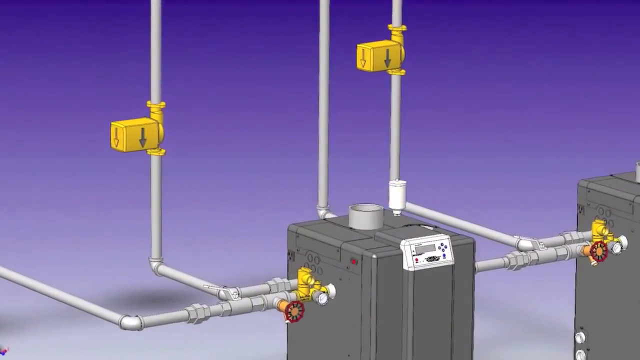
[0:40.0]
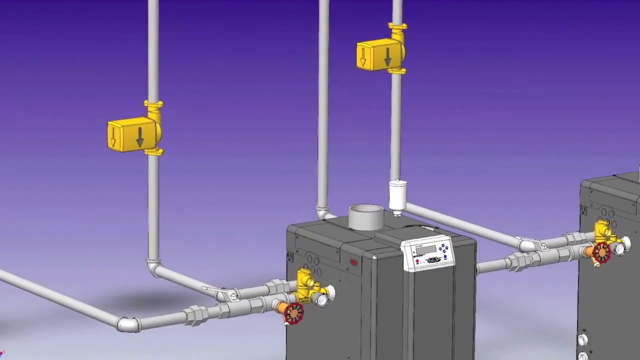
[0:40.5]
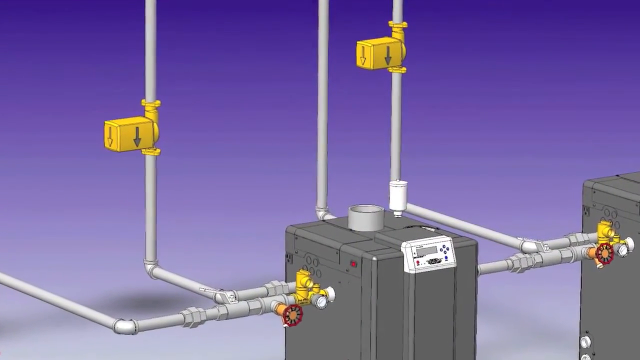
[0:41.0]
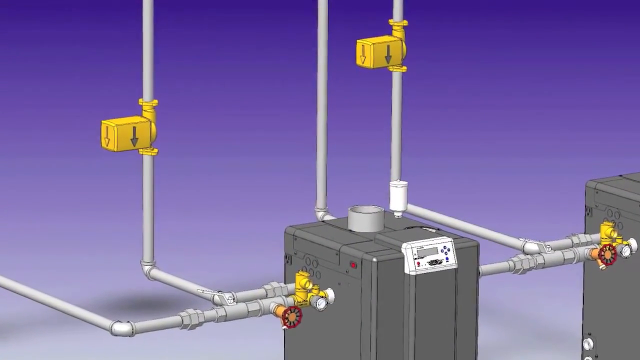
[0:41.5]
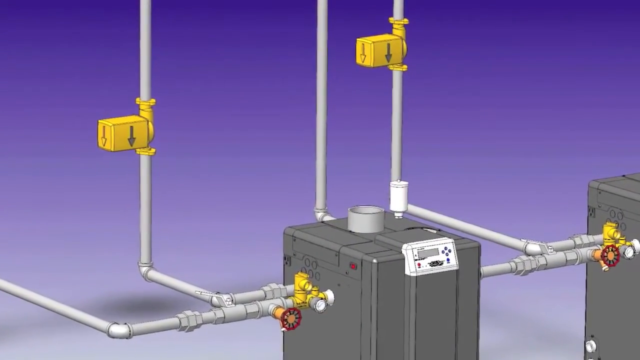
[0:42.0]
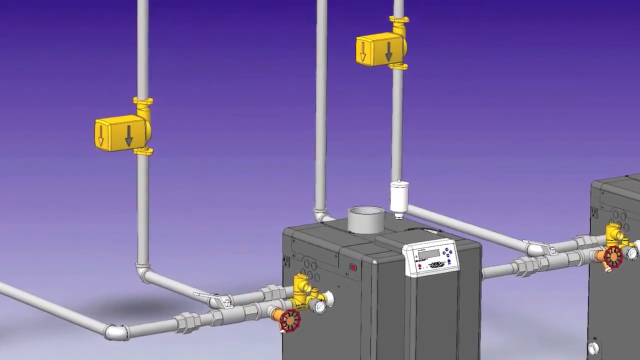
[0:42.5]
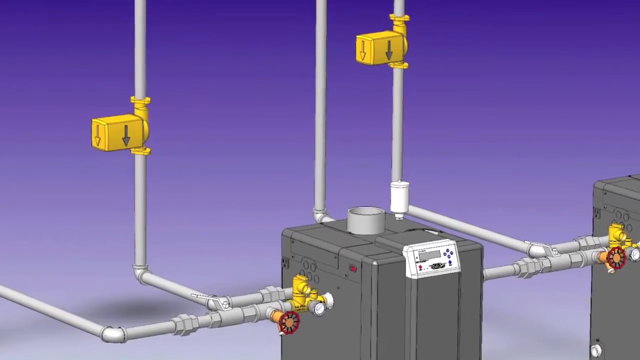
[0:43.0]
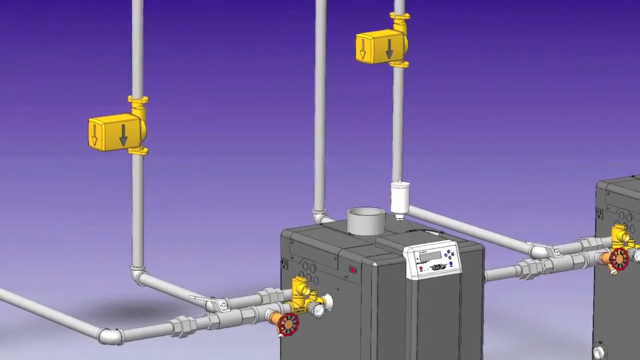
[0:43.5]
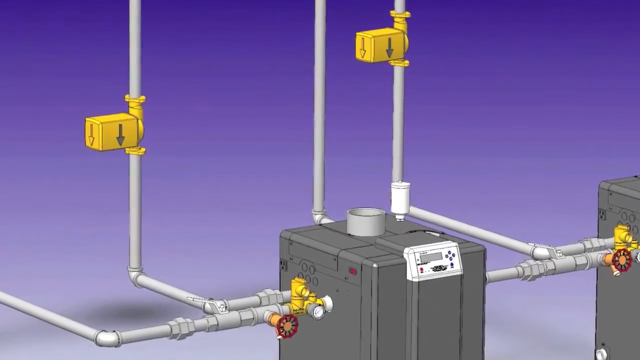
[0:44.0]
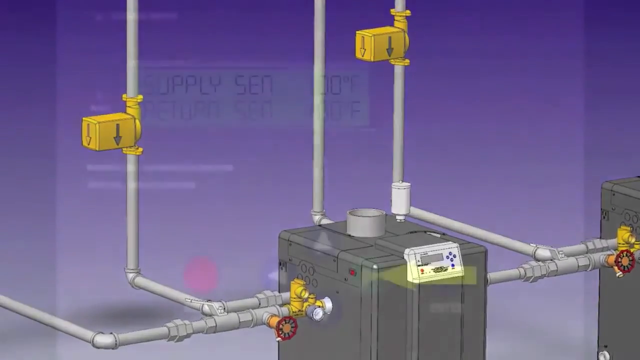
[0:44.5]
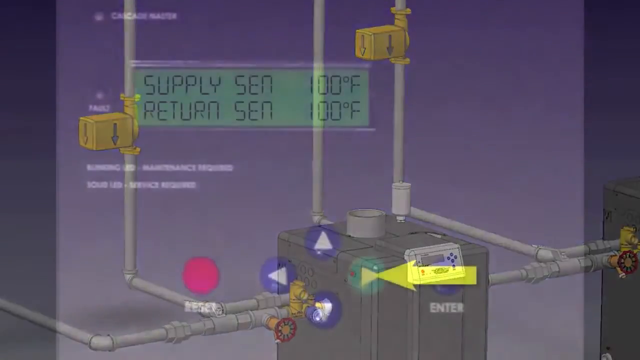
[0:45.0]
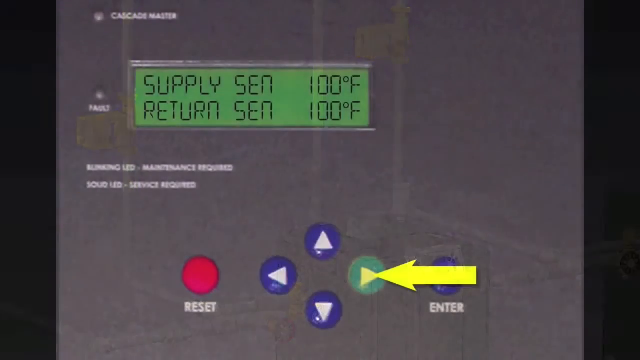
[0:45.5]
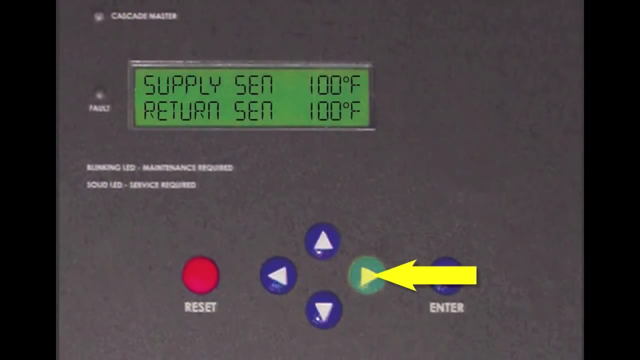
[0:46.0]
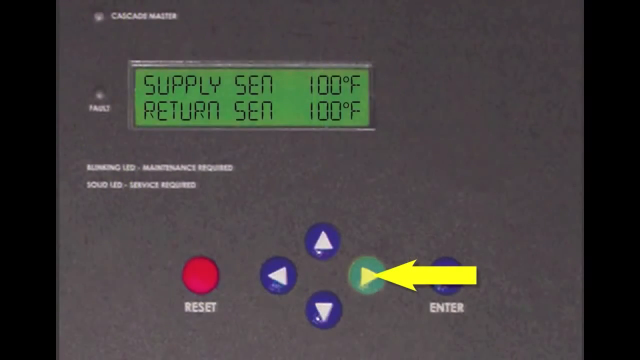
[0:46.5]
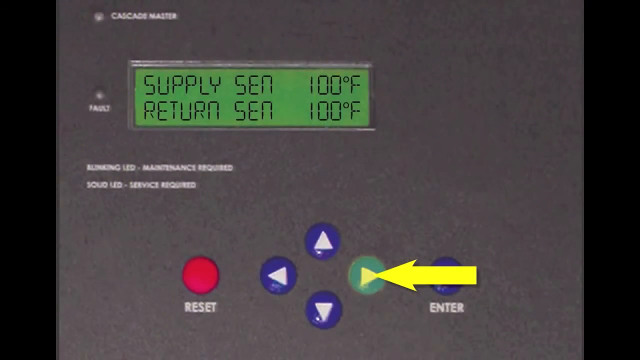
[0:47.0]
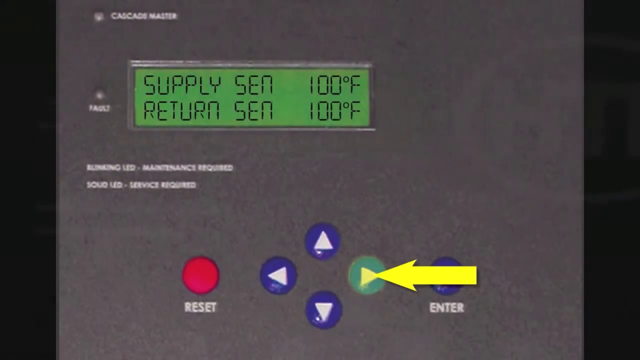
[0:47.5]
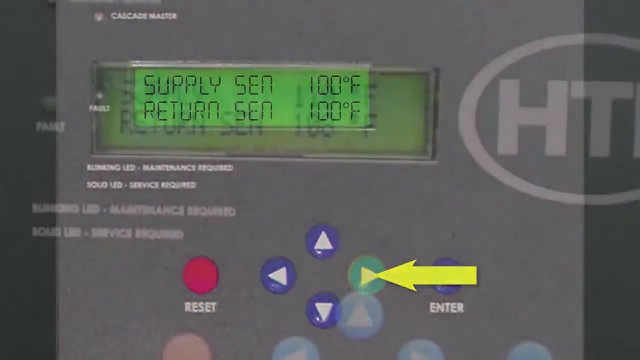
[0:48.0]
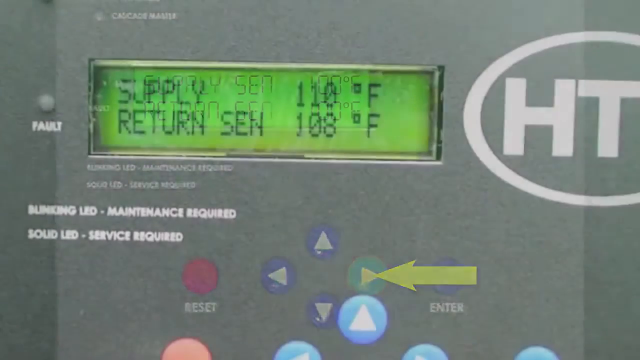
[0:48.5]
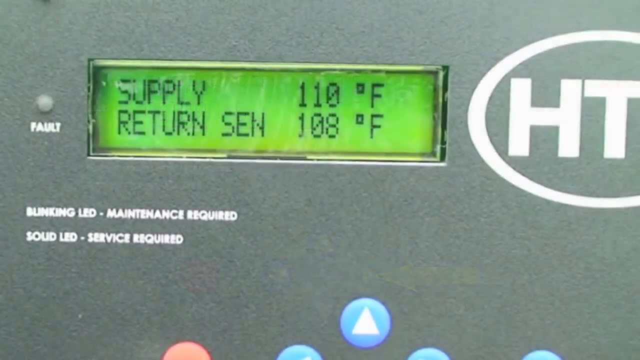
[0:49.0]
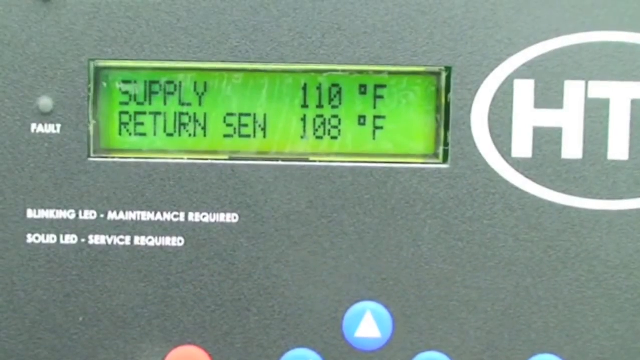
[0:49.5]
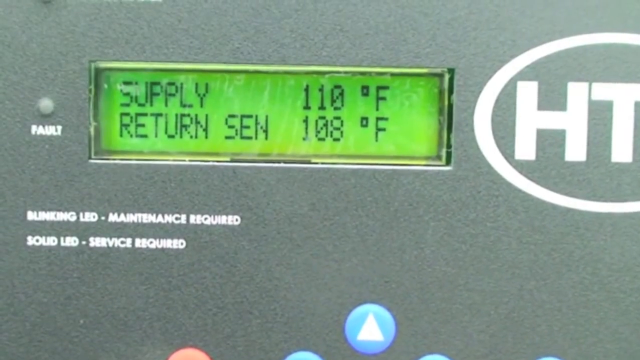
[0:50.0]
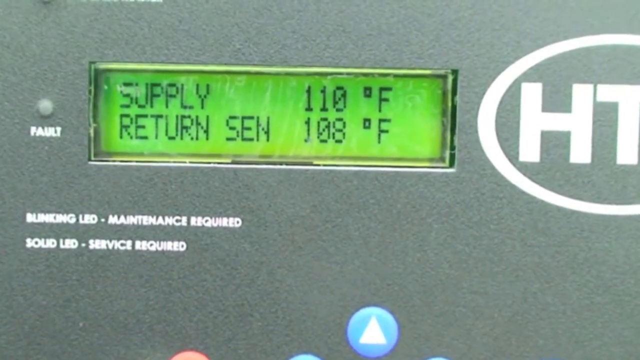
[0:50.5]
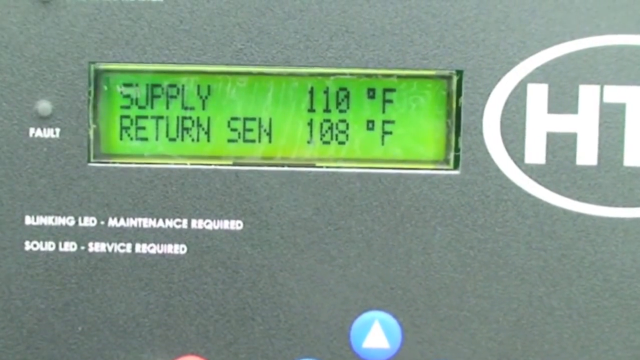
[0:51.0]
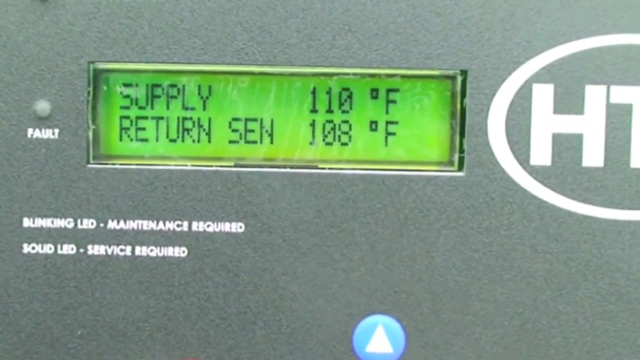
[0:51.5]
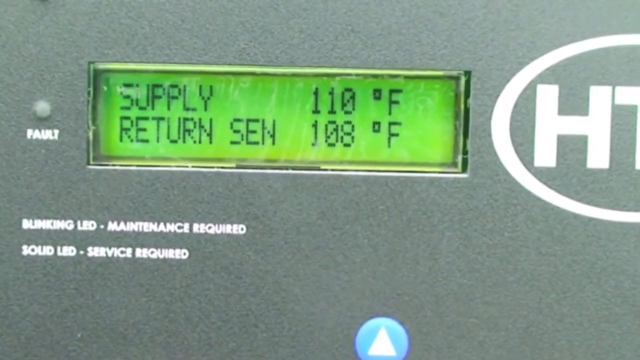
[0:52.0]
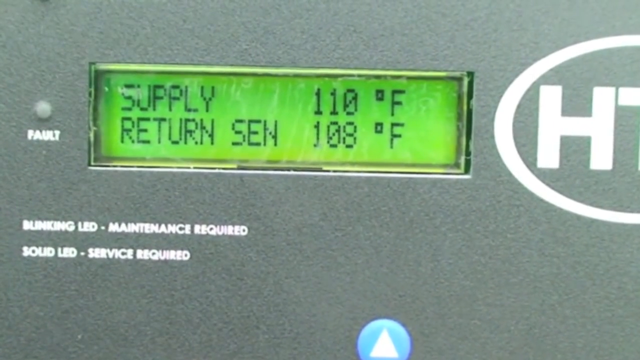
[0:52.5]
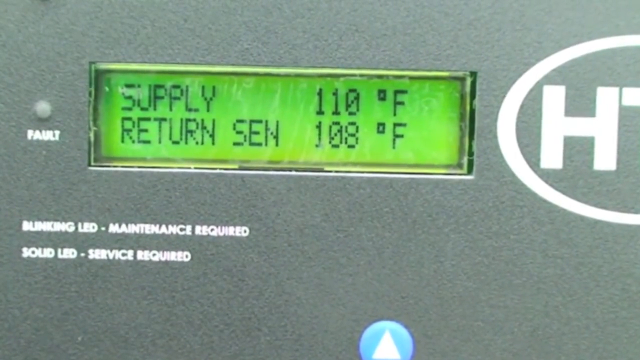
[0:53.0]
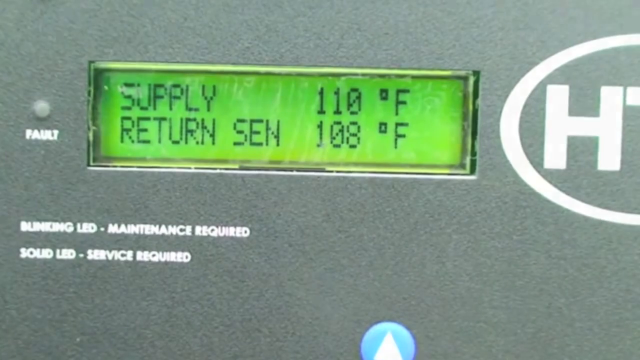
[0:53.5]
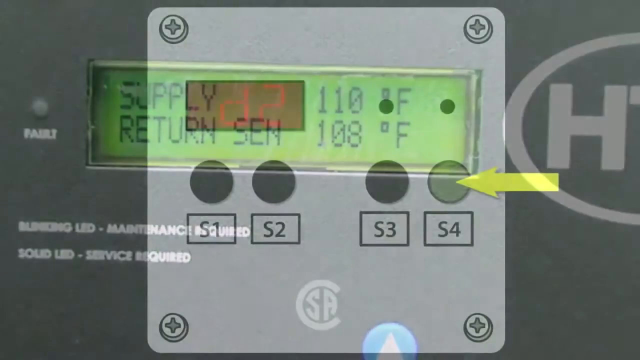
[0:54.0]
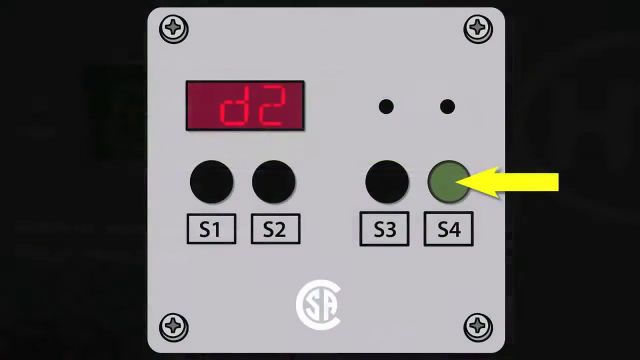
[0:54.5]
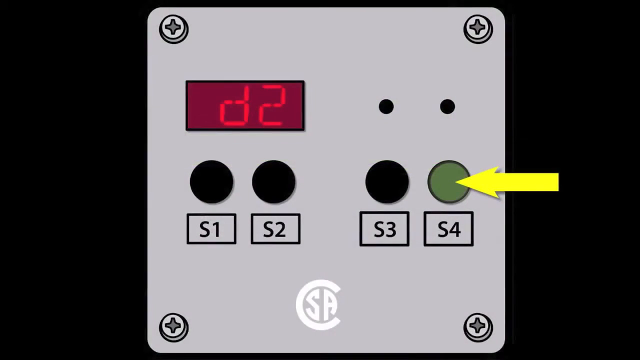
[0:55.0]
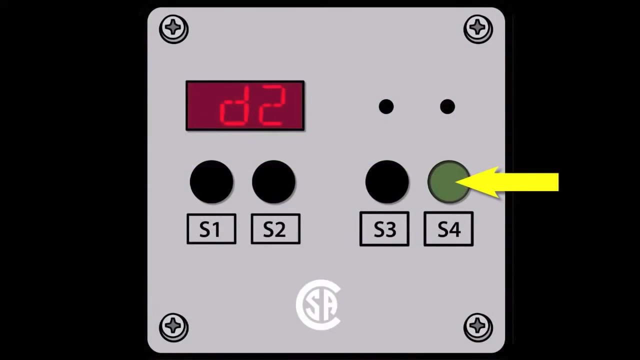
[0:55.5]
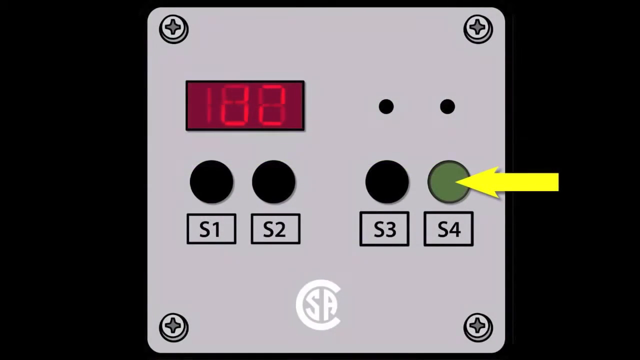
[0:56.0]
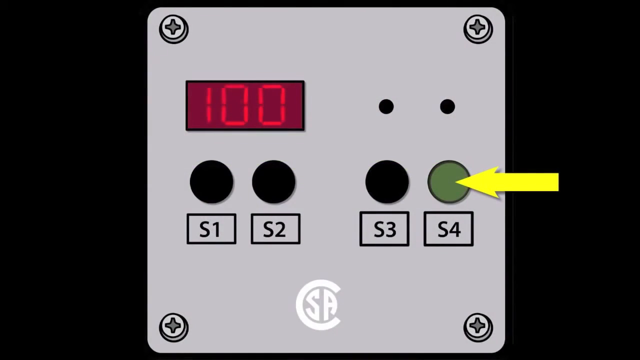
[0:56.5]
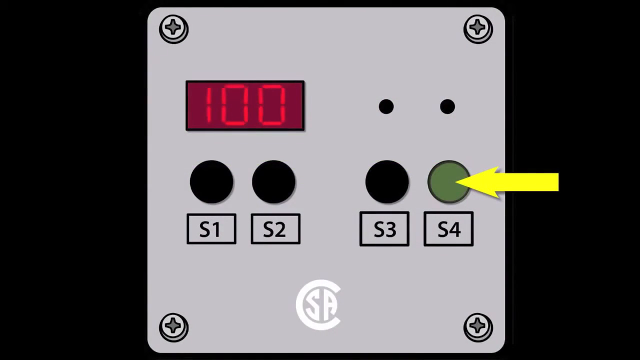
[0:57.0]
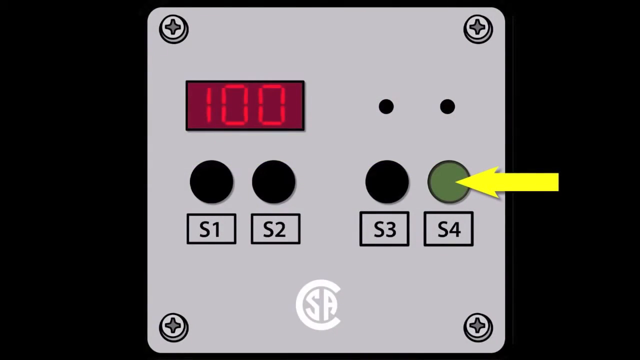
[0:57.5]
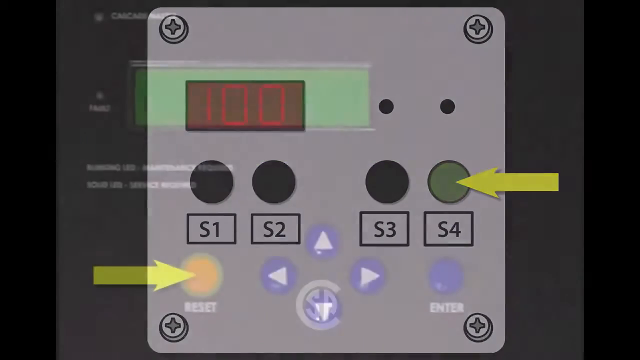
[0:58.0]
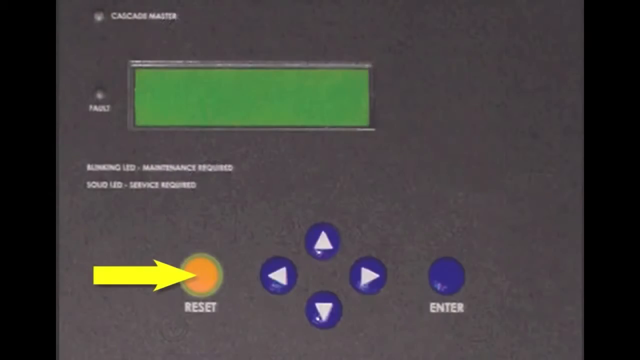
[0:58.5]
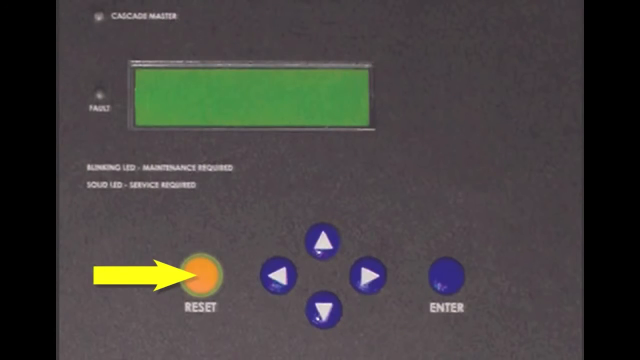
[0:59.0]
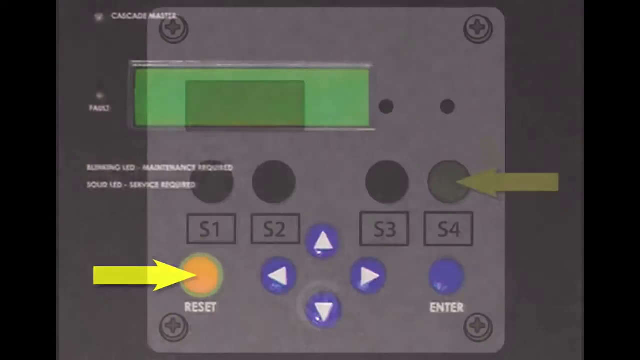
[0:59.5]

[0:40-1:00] After zooming in slightly on this image, the video briefly returns to the grey box with the blue and red buttons. Now a yellow arrow points to the arrow button on the right side; the arrow on that button is colored yellow and the button is changed to green to highlight it. The video then zooms in on another green display on a grey machine that says "supply 110 degrees Fahrenheit" and shows a return reading of 108 degrees Fahrenheit. It slowly zooms in slightly on this, then goes back to the other grey rectangle with screws on all four corners. A yellow arrow pointing toward the left is on the S4 button, the green button on the display. The red box swiftly changes from "D2" to "100". The screen then goes back to the other grey display, this time with the reset button highlighted and a yellow arrow pointing toward the right side of the screen.